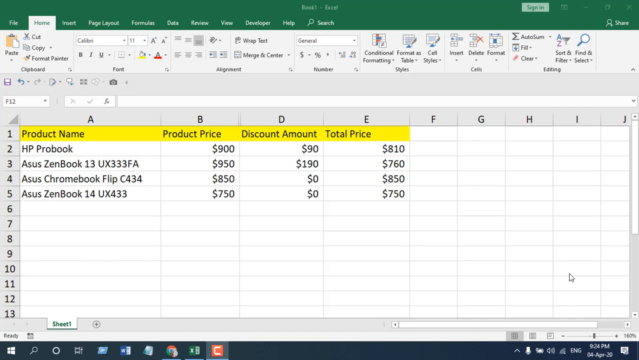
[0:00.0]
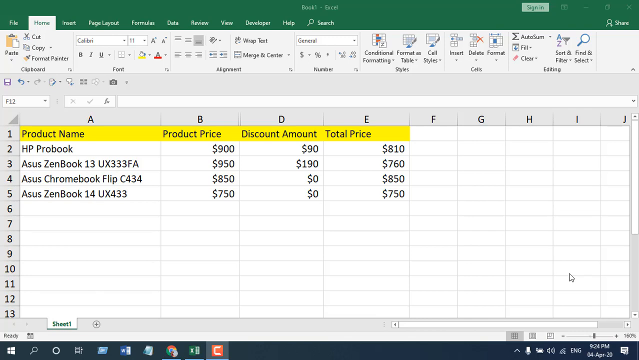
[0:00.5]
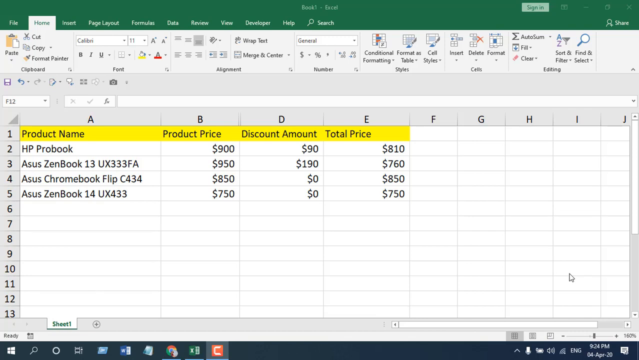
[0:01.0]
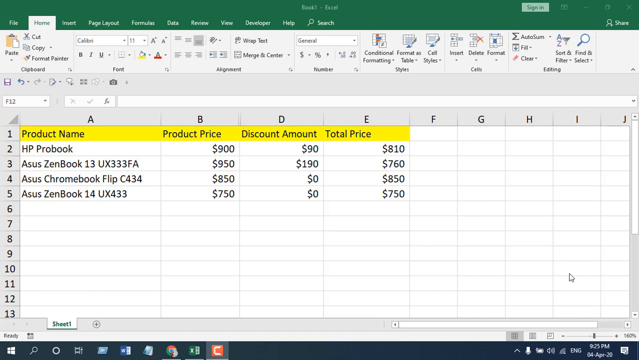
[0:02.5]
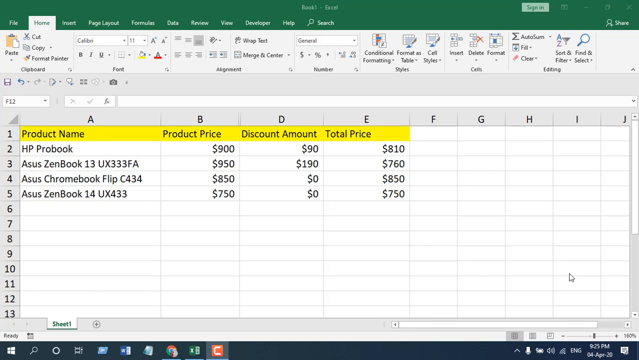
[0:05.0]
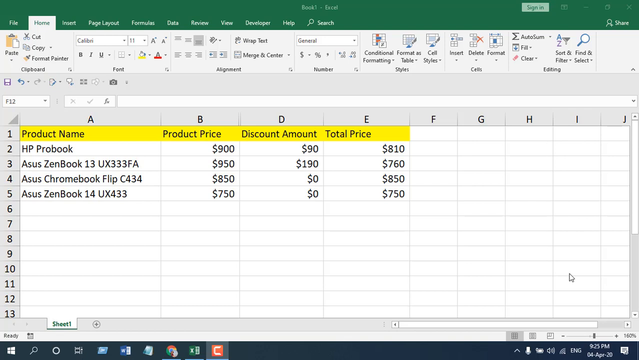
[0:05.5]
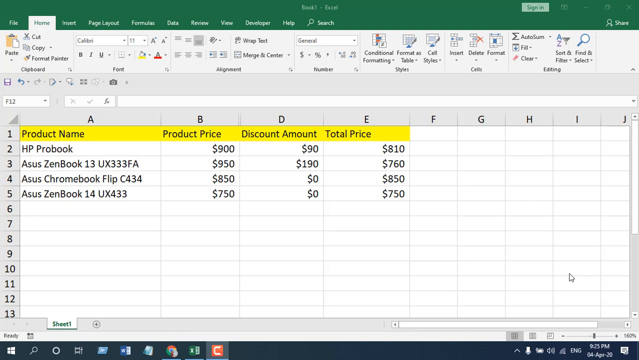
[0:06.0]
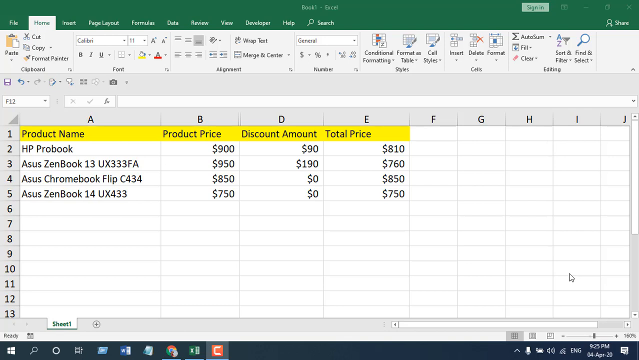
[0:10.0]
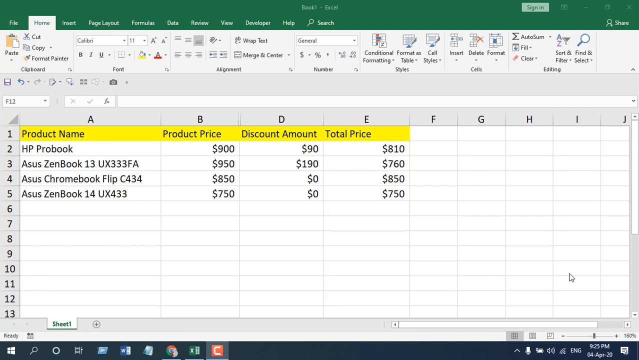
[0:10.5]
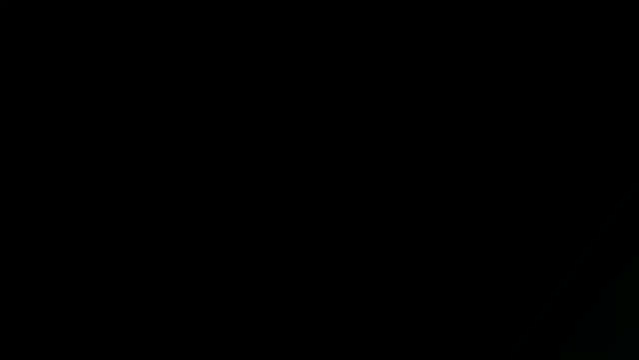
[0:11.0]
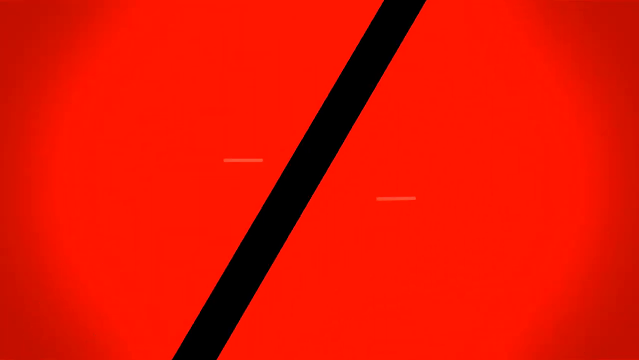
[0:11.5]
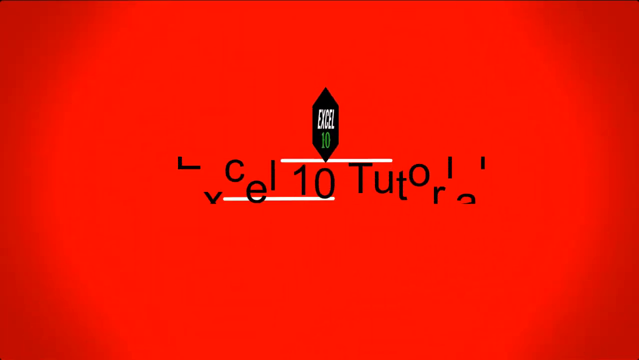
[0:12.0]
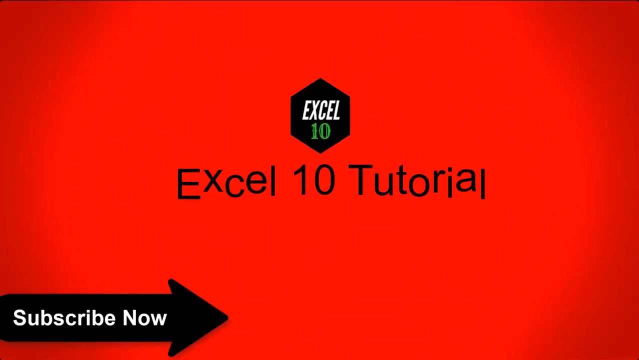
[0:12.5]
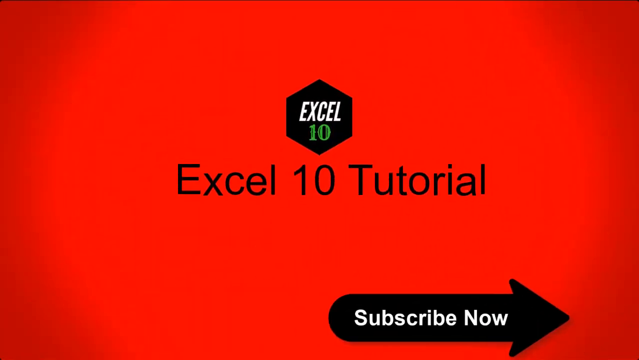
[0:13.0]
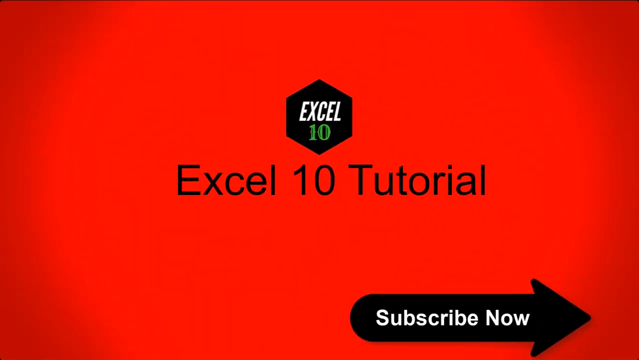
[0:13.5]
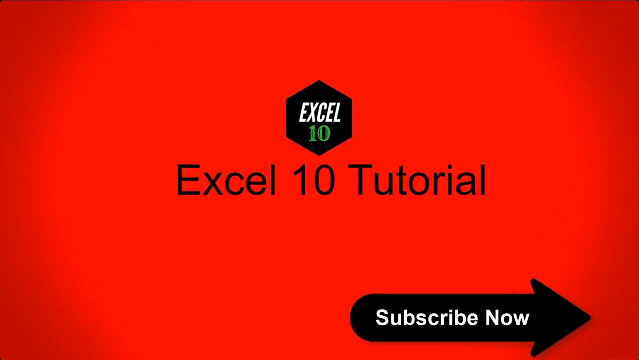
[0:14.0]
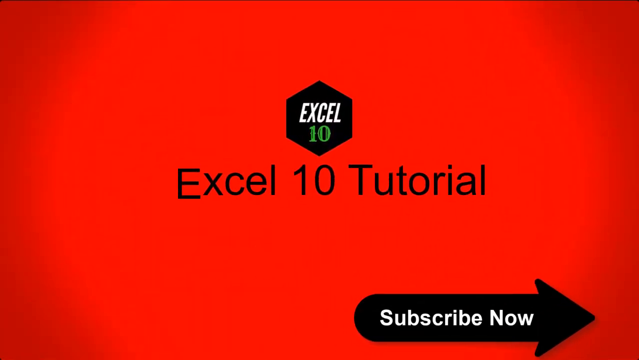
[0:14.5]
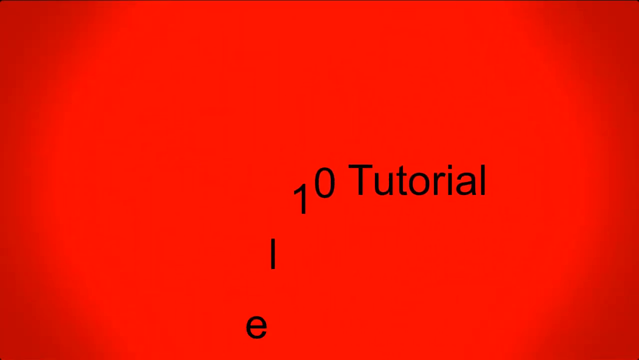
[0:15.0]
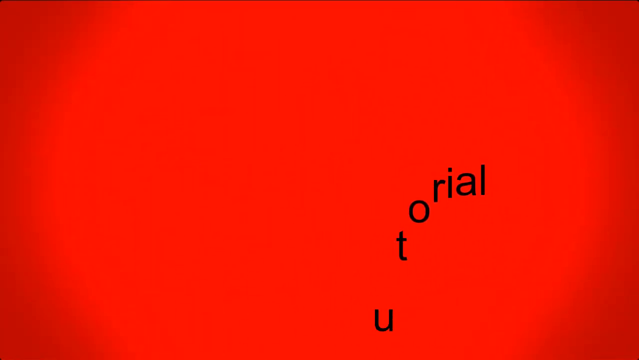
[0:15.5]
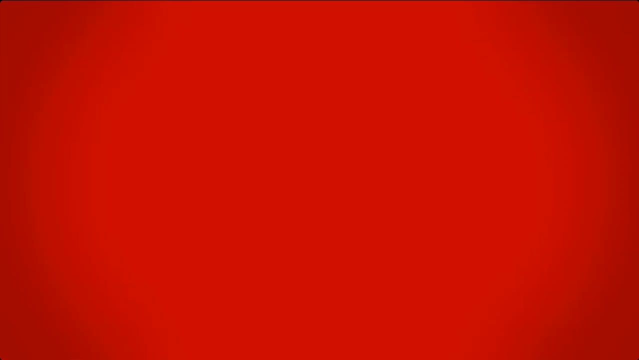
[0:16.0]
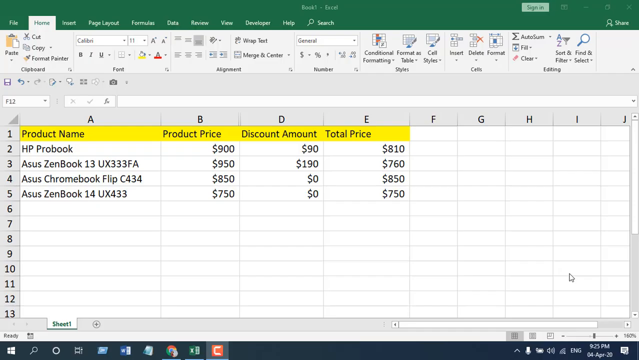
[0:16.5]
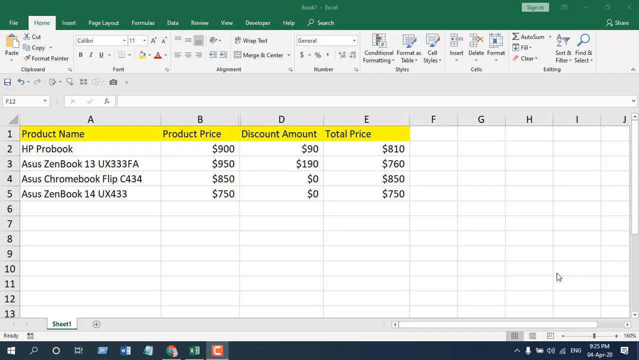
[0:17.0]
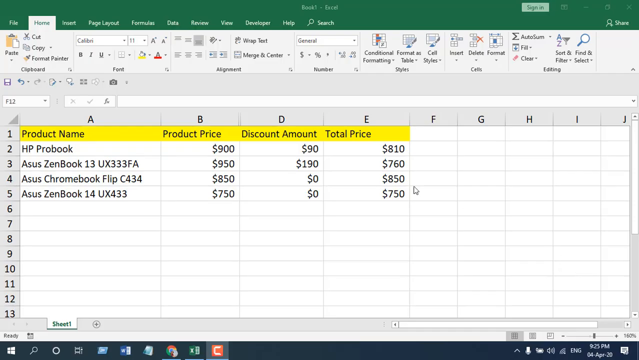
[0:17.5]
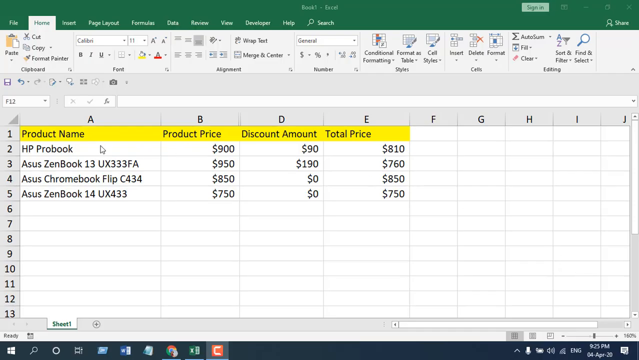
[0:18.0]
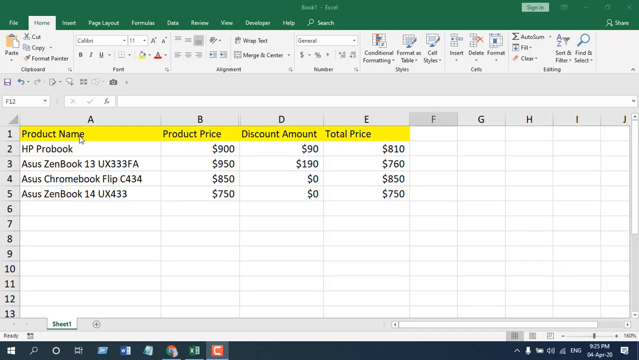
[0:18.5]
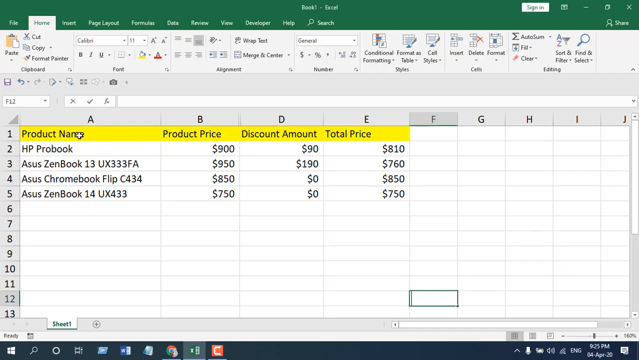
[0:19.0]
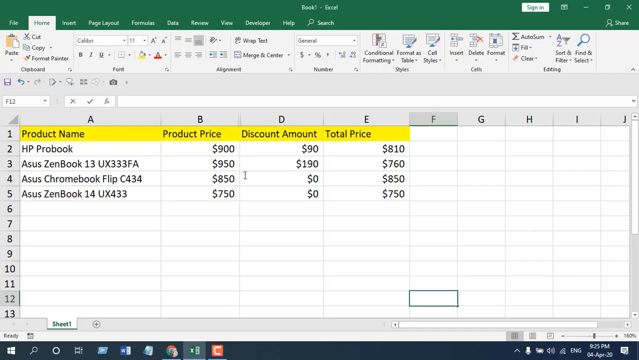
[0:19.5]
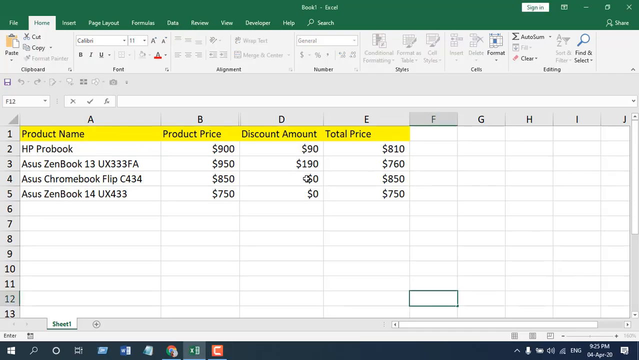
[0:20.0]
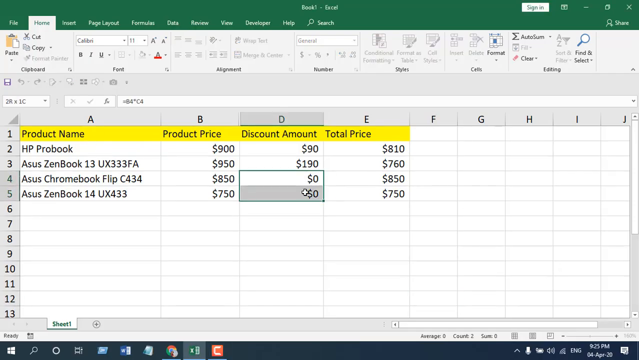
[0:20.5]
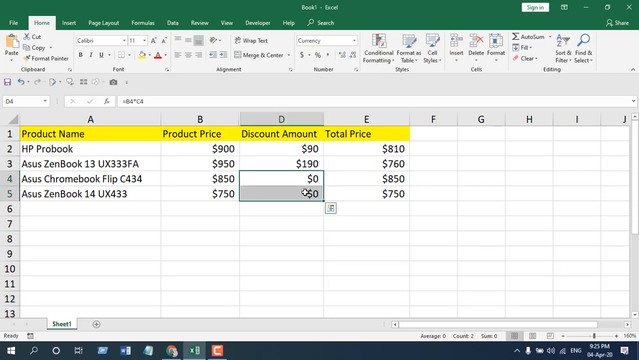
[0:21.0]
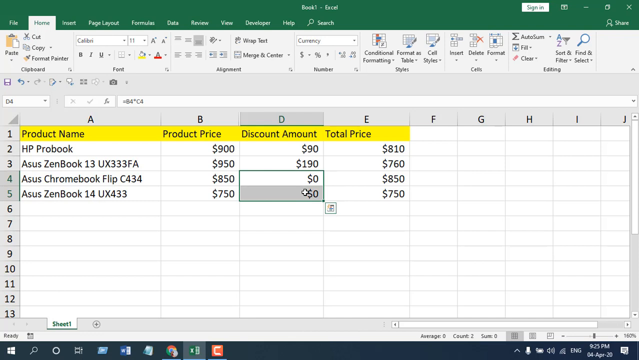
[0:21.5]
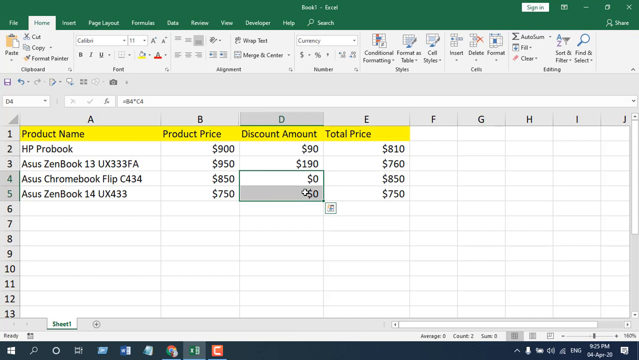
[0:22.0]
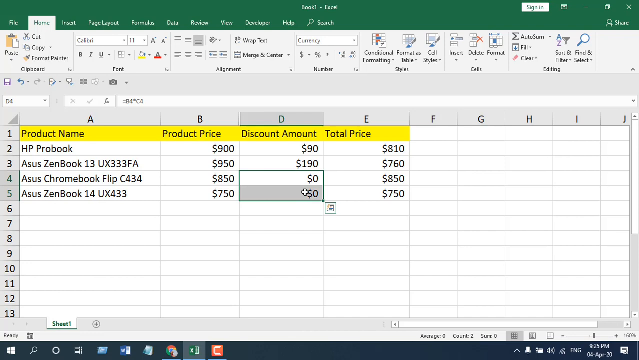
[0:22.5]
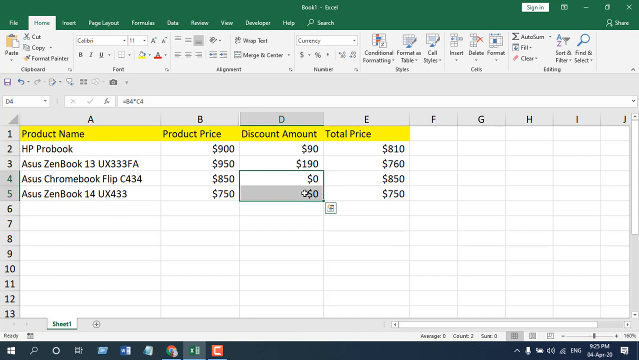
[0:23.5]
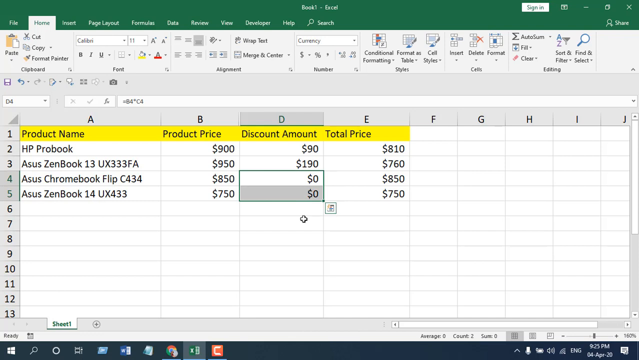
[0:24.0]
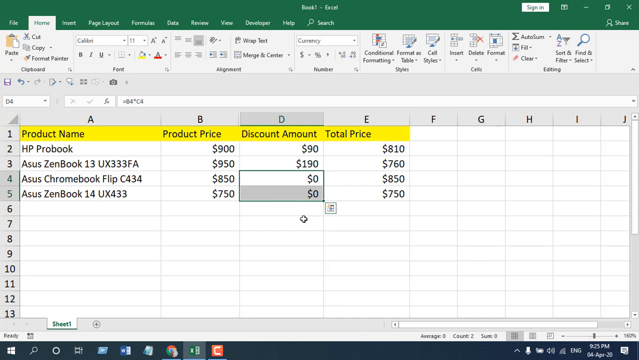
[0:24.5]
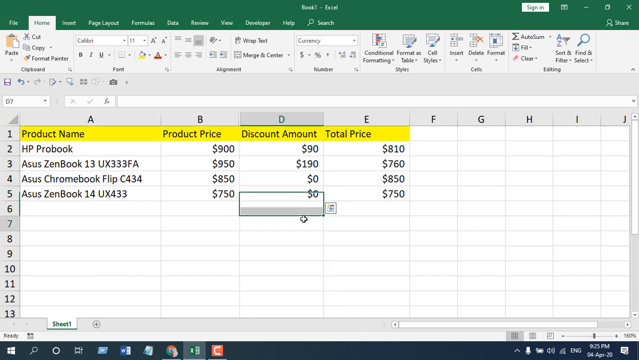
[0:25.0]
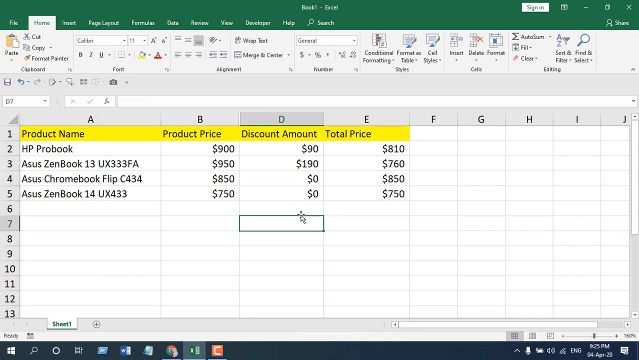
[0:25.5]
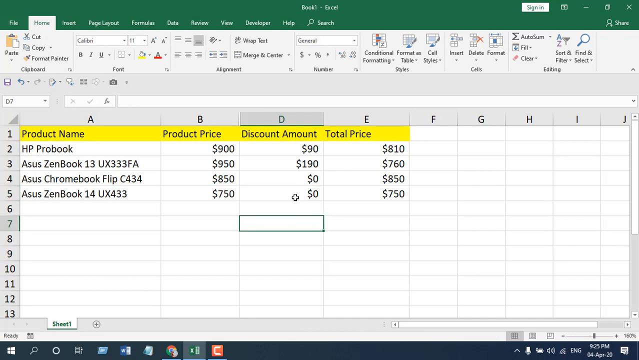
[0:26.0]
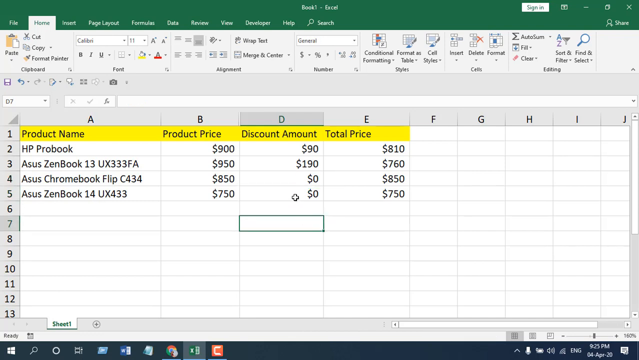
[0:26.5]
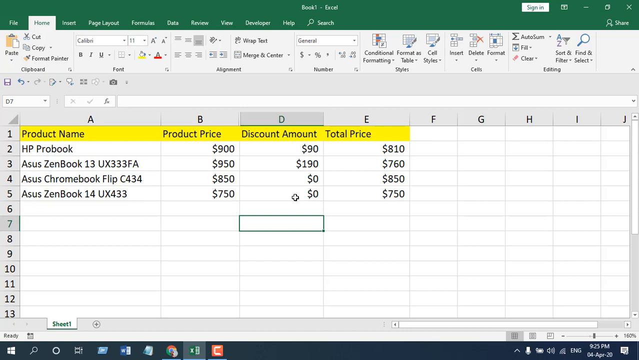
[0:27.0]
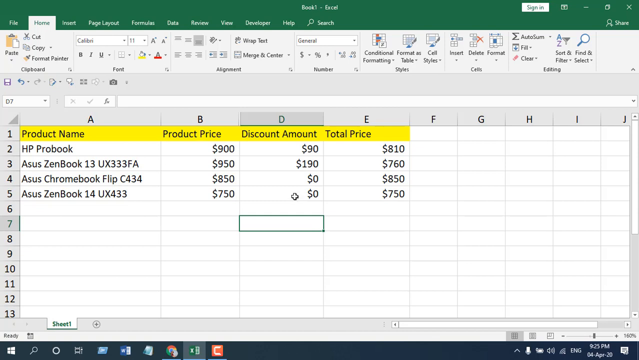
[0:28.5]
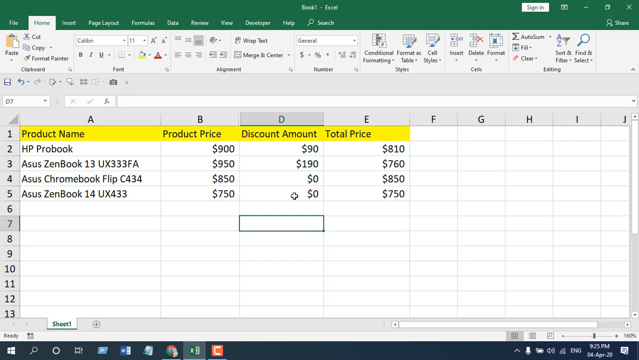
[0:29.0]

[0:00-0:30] A screencast shows Microsoft Excel open to a spreadsheet listing product names with their product price, discount amount and total price. Four products are on screen. The first is the HP ProBook, with a product price of $900, a discount amount of $90 and a total price of $810. The next row holds the ASUS ZenBook 13 UX333FA, priced at $950 with a $190 discount, for a total of $760. Next is the ASUS Chromebook Flip C434, with a product price of $850, a discount amount of $0 and a total price of $850. The final product is the ASUS ZenBook 14 UX433, with a product price of $750, a discount amount of $0 and a total price of $750. After about 10 seconds on the spreadsheet, the video cuts to a red background with a logo for Excel 10, and a caption underneath in black font reads "Excel 10 Tutorial." At the bottom of the screen is an arrow with the words "Subscribe Now" written on it. The video then cuts back to the Excel spreadsheet, and the mouse cursor moves to the Discount Amount column.